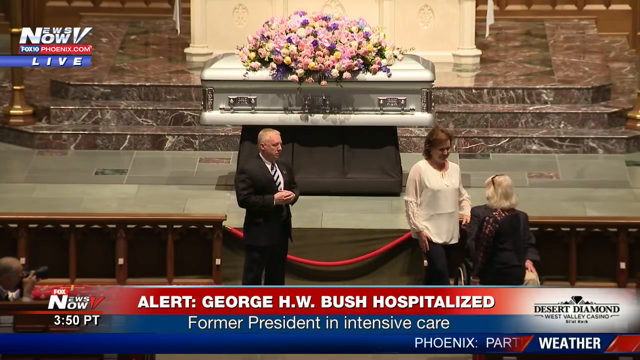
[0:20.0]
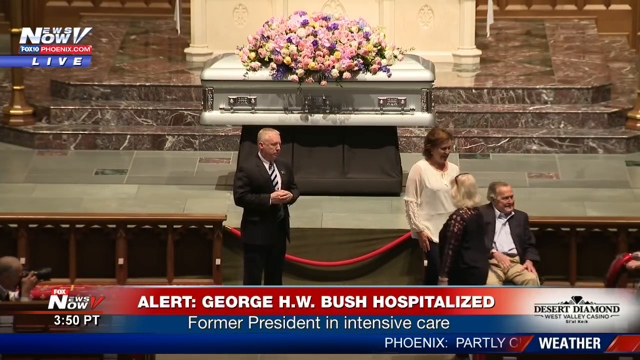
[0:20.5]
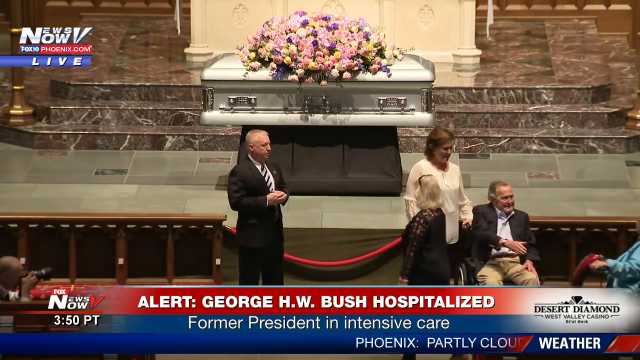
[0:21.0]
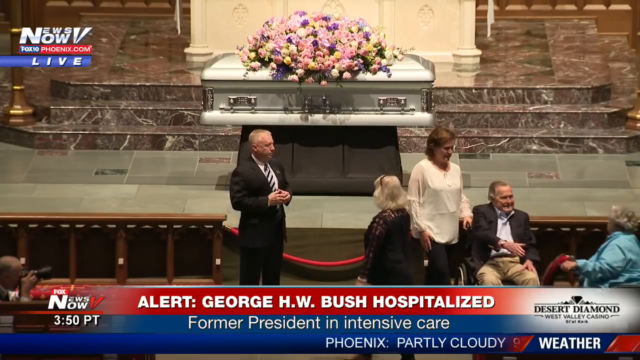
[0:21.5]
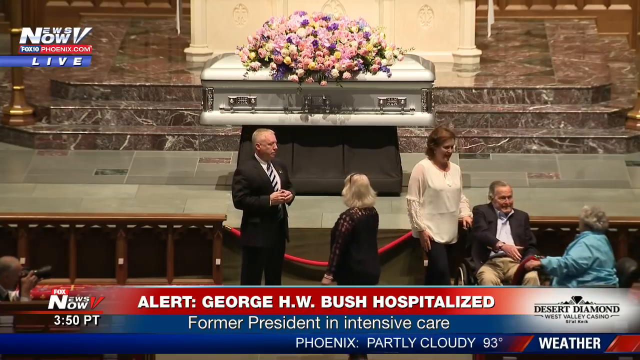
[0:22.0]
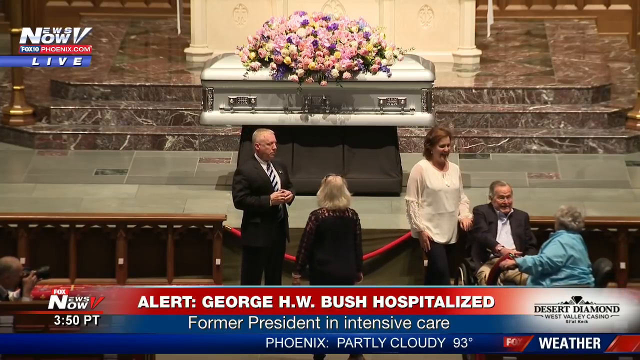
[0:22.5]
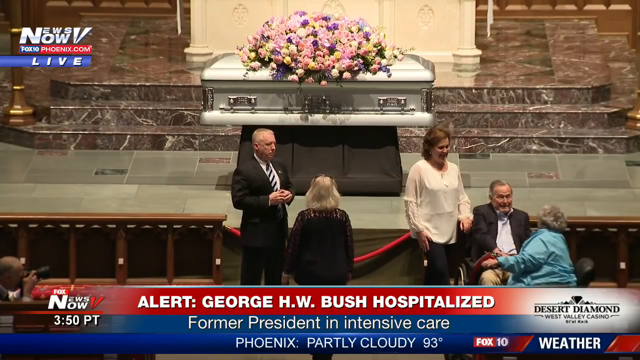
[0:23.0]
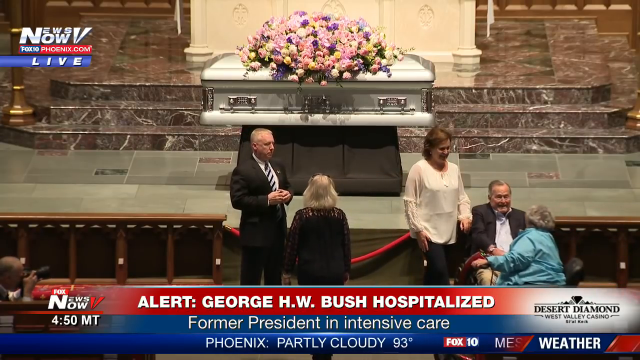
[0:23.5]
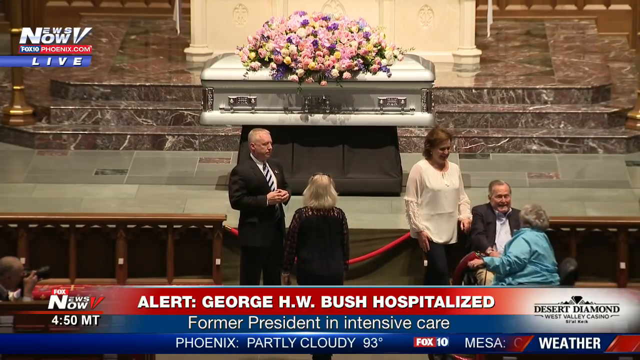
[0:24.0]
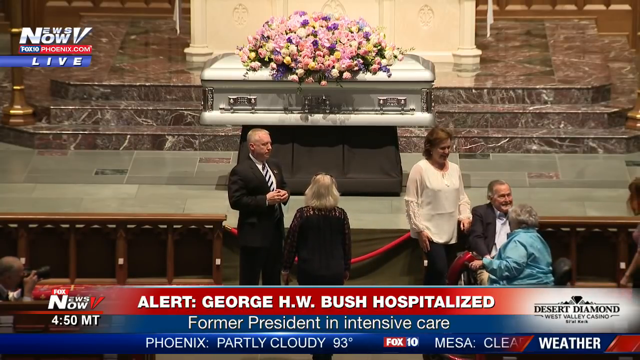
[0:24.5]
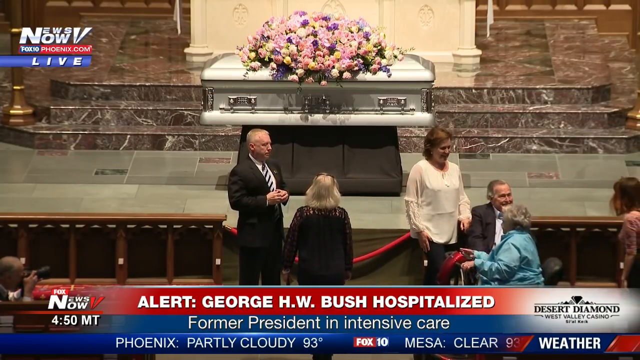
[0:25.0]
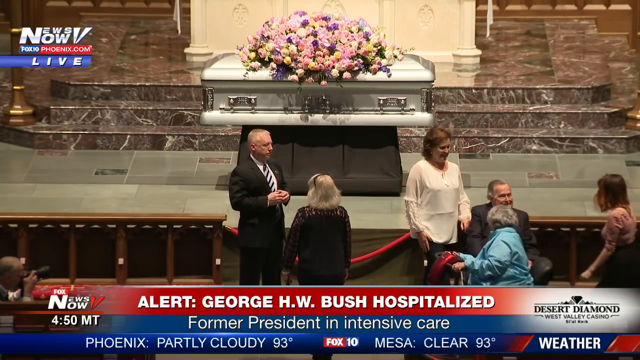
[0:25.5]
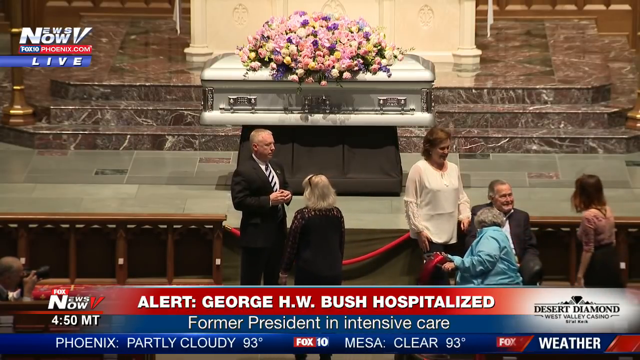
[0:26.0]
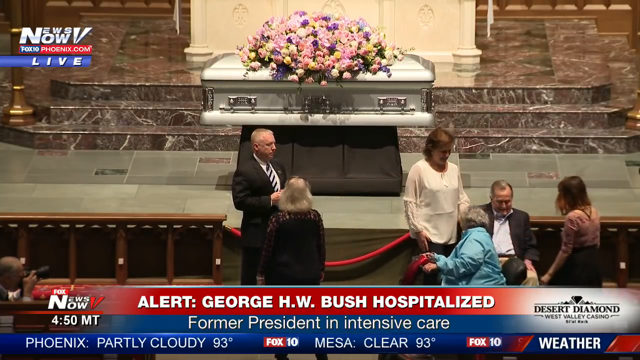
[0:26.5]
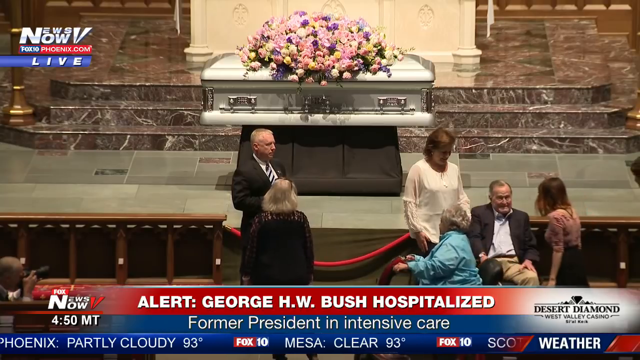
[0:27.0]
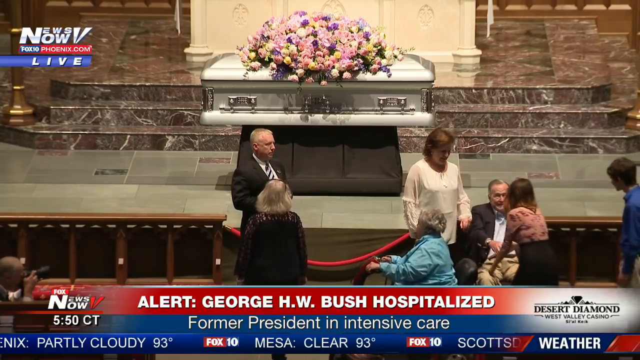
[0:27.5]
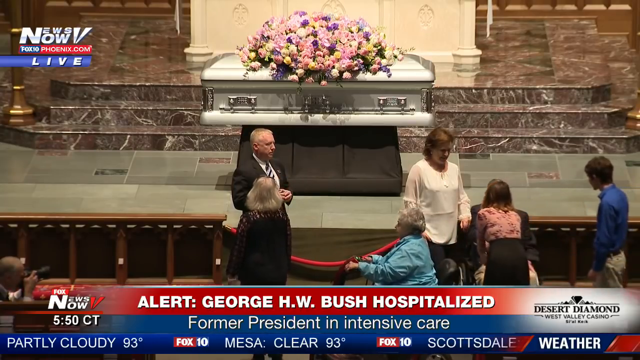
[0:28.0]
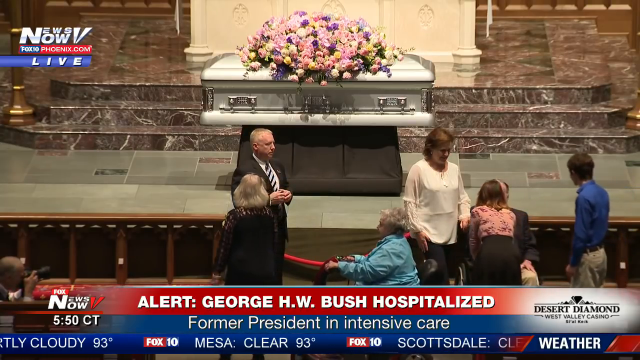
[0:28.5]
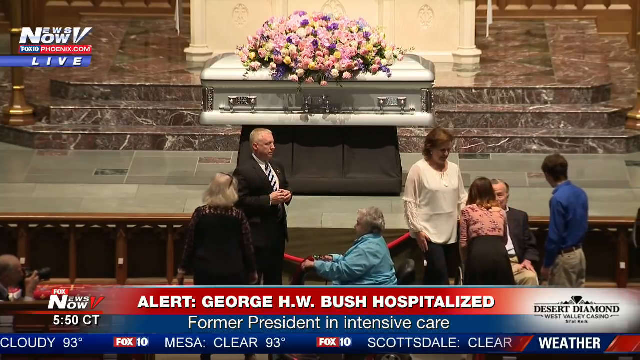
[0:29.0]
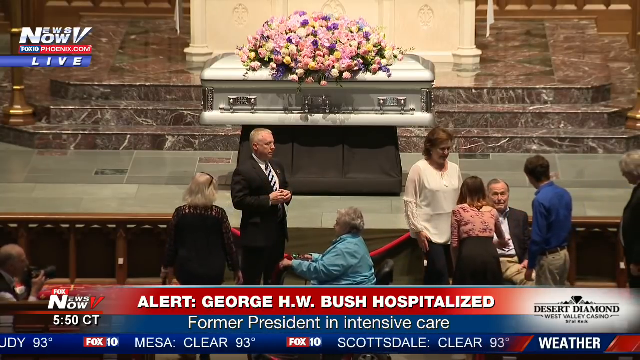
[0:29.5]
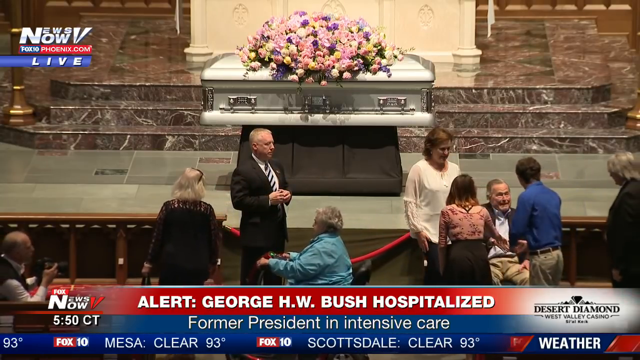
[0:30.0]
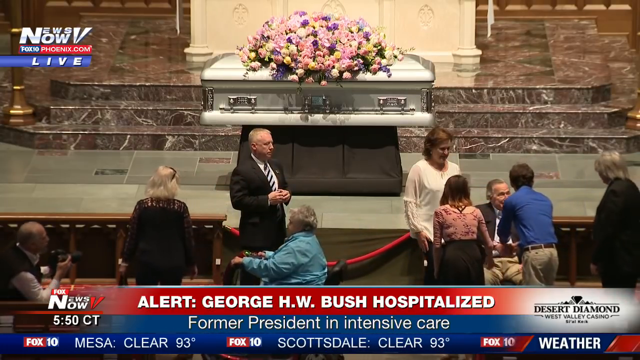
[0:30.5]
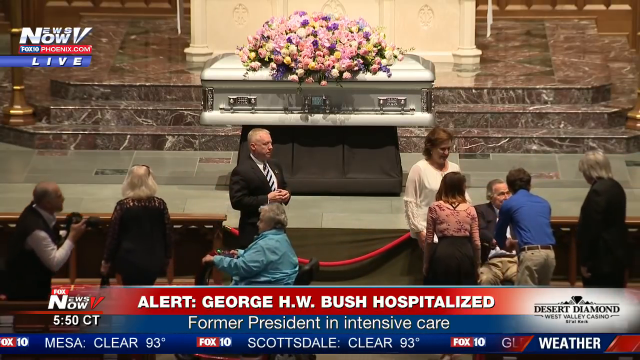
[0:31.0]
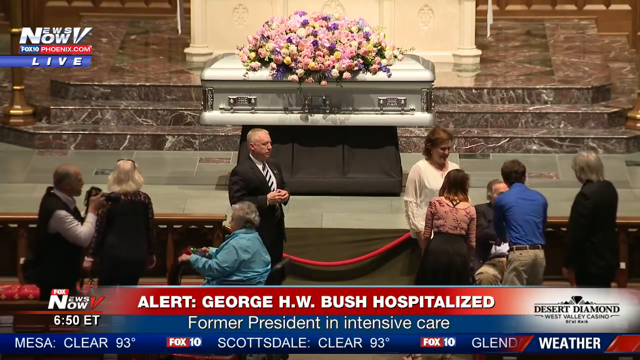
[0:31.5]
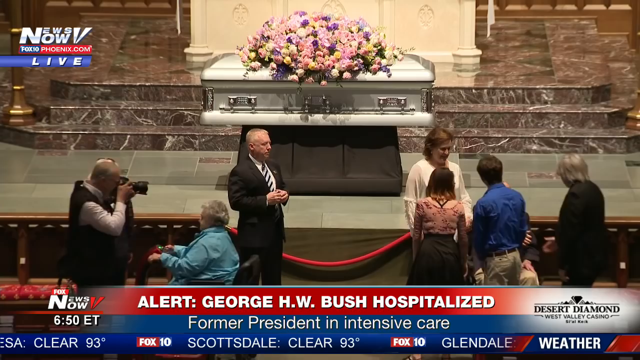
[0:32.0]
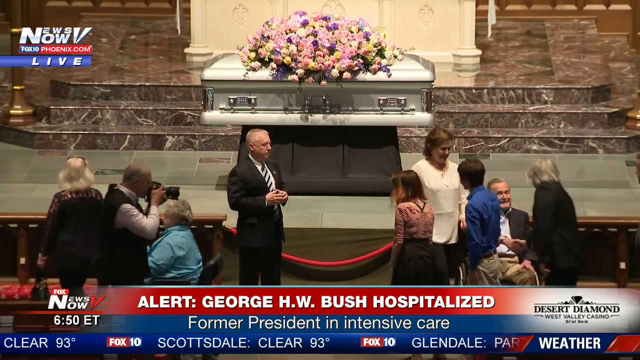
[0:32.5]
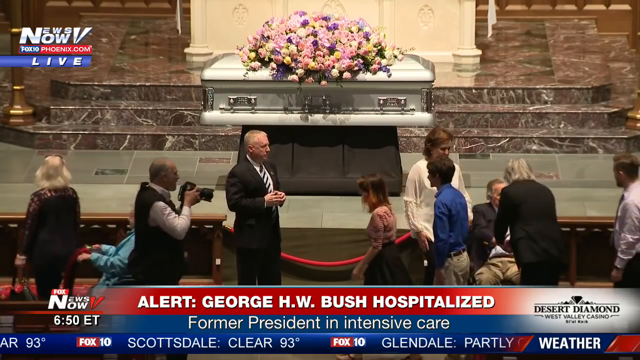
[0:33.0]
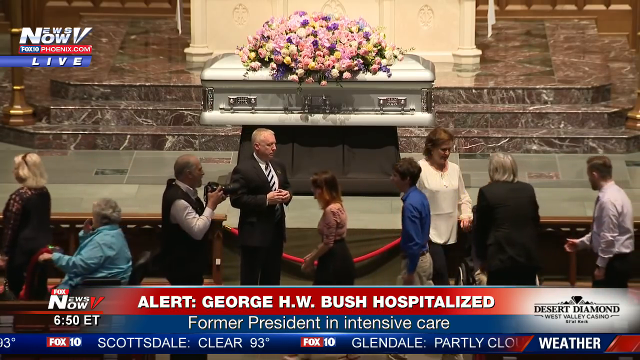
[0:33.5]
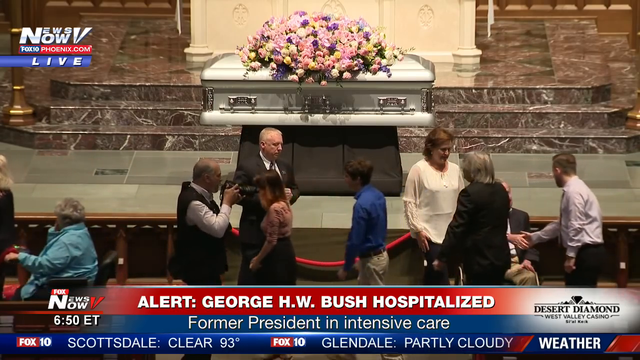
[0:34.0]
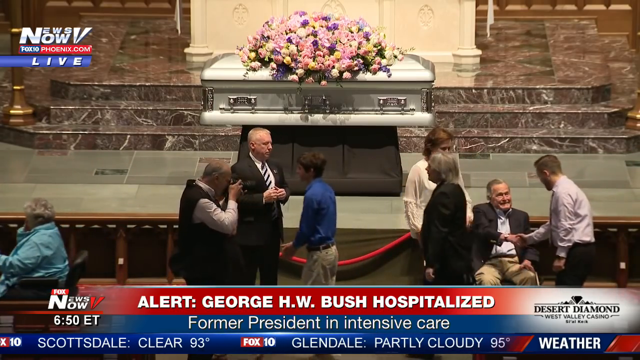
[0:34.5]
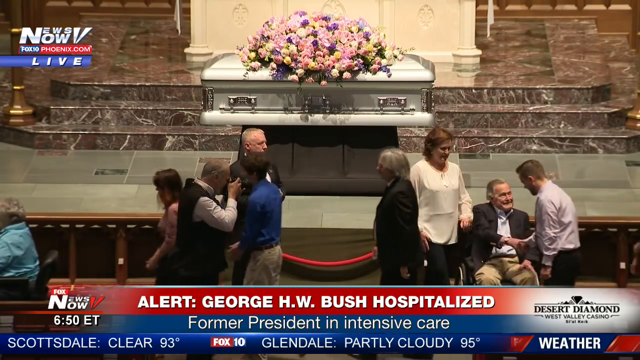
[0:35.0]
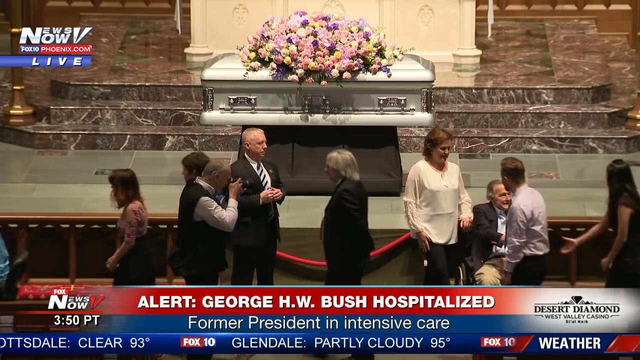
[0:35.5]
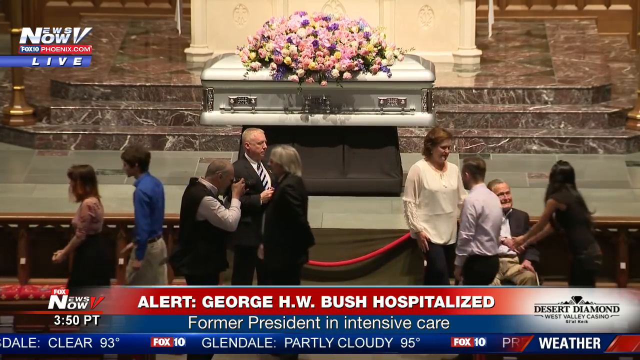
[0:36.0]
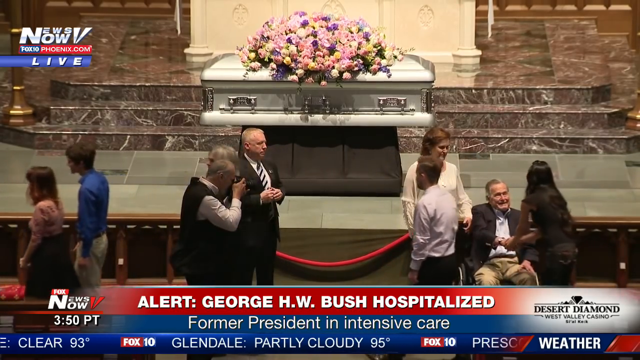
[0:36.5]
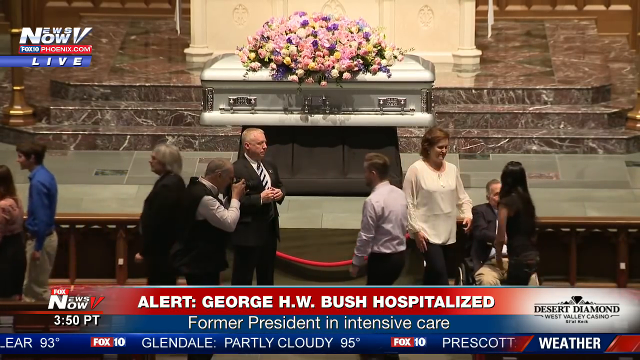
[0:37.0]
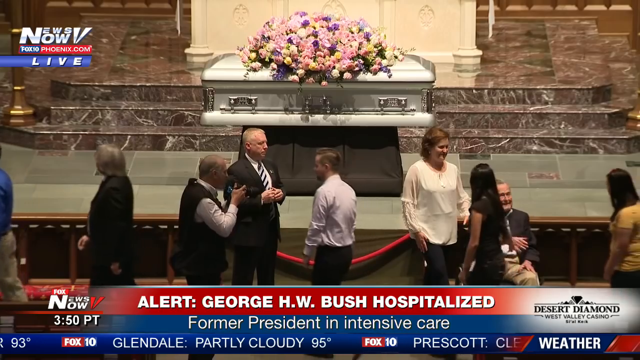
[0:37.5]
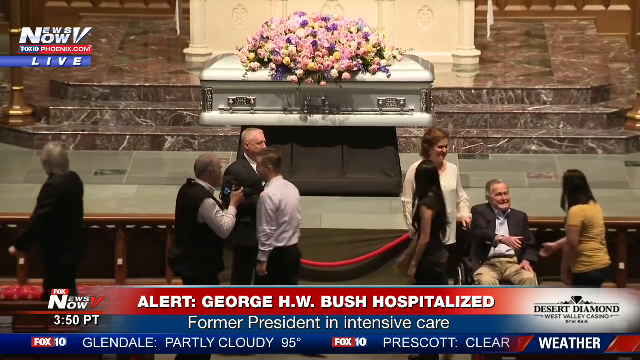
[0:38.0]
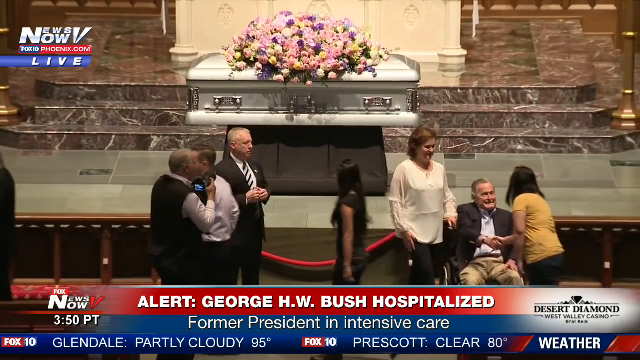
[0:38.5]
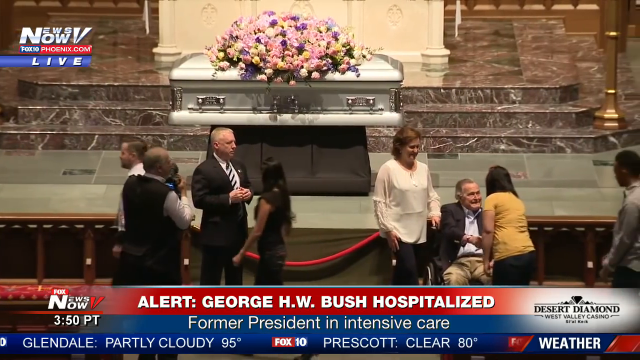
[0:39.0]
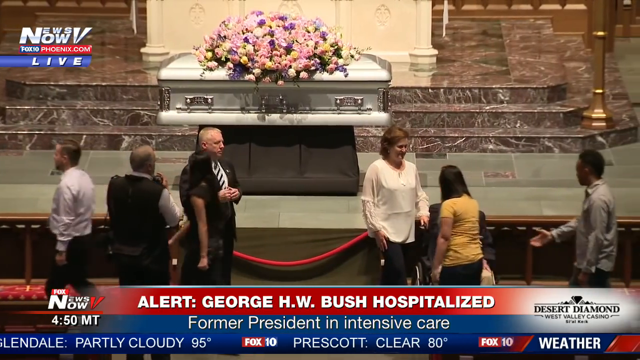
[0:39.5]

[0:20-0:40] Different individuals come up to shake George H.W. Bush's hand. He is sitting in a wheelchair next to a woman in a white shirt. To the left of them is a man in a suit, and another man comes up with a camera and takes pictures. At the top left of the screen is a logo that says "News Now" and "Fox10Phoenix.com," with a blue banner underneath bearing the word "live" in silver text. At the bottom of the screen, a red banner with white text says "Alert George H.W. Bush Hospitalized," and below it a blue banner with white text says "former president in intensive care." On the bottom right is a logo for Desert Diamond West Valley Casino. Behind them all is a stage with a silver casket topped with many pink, purple, and yellow flowers that take up the majority of the casket. The casket is on top of a brown pedestal of some sort holding it up, and there are three stone steps behind it.